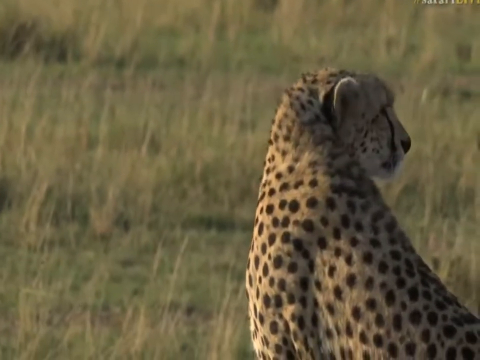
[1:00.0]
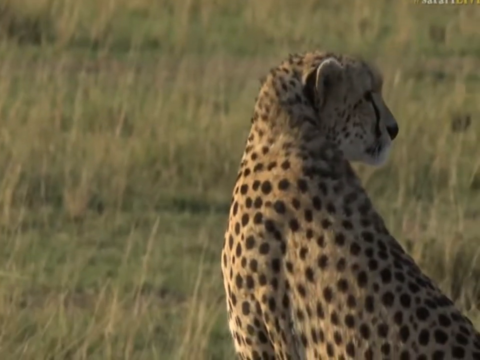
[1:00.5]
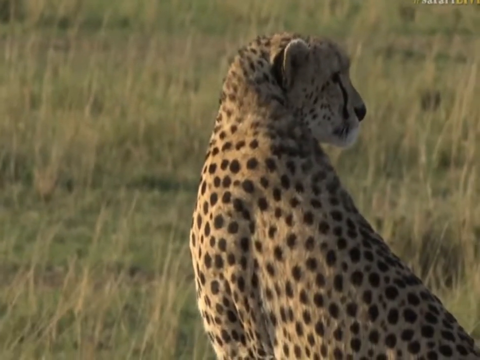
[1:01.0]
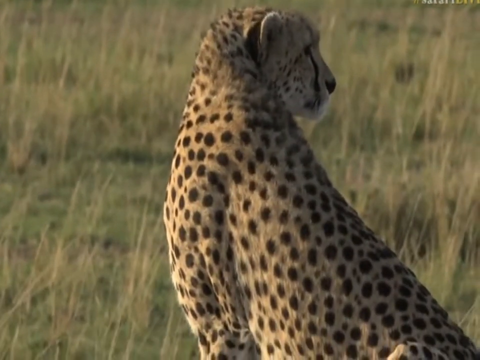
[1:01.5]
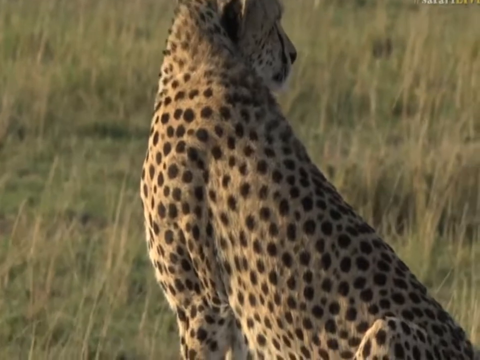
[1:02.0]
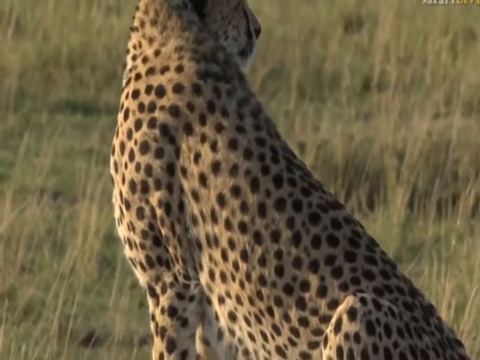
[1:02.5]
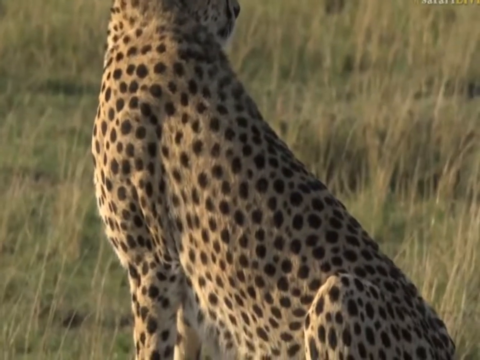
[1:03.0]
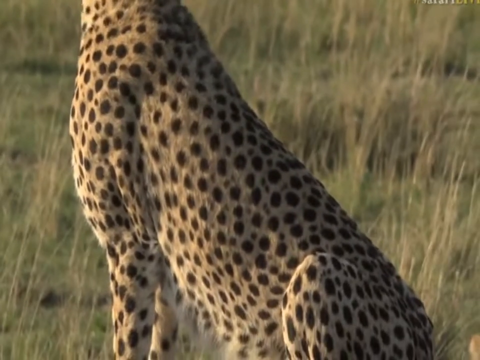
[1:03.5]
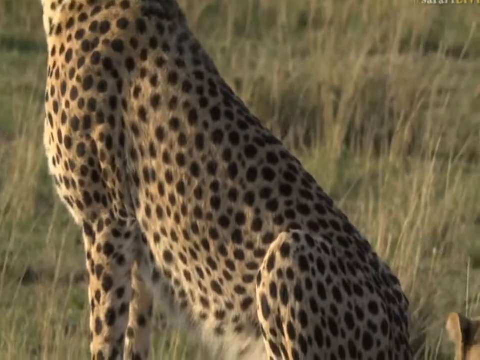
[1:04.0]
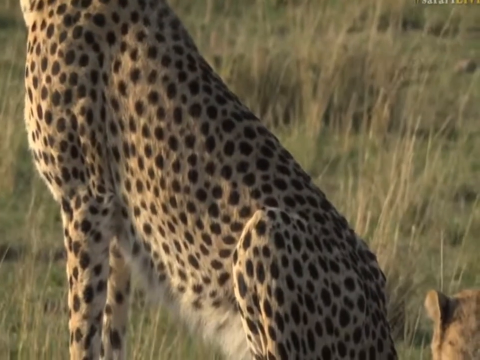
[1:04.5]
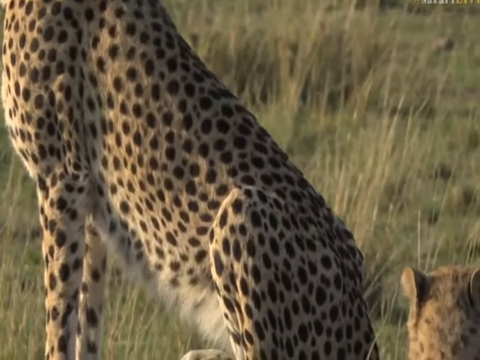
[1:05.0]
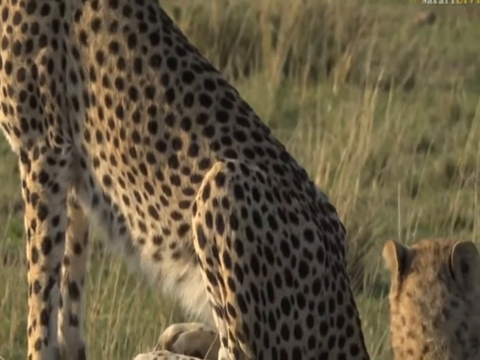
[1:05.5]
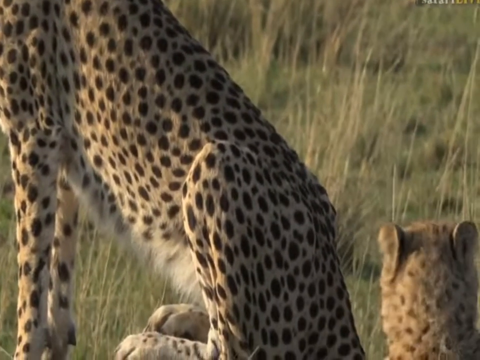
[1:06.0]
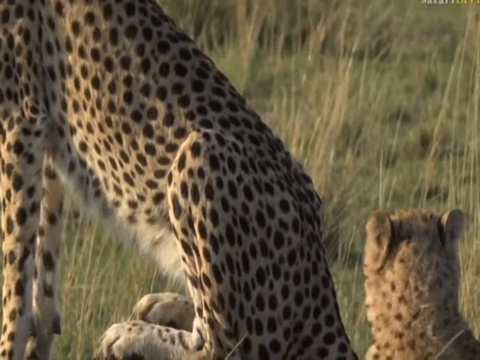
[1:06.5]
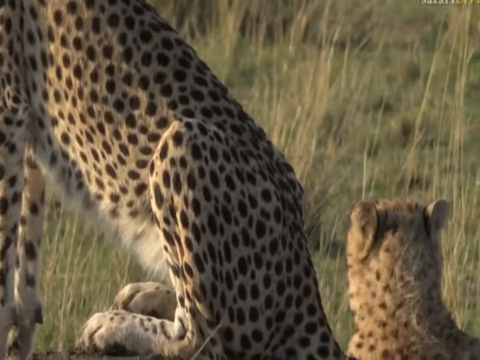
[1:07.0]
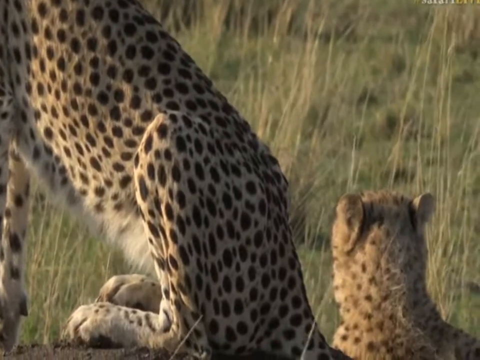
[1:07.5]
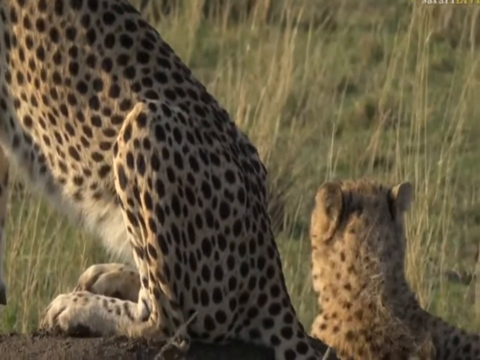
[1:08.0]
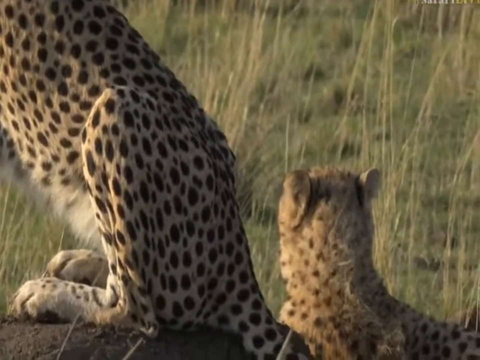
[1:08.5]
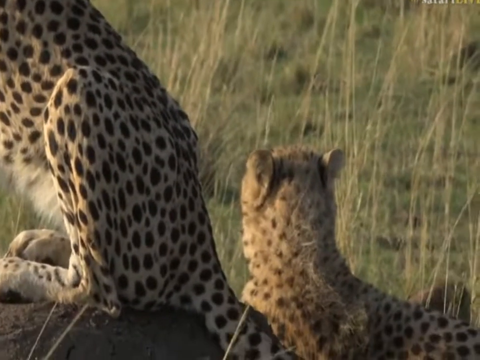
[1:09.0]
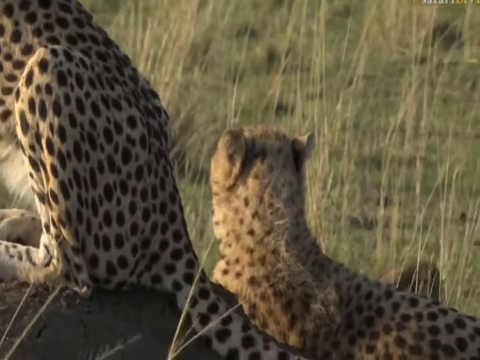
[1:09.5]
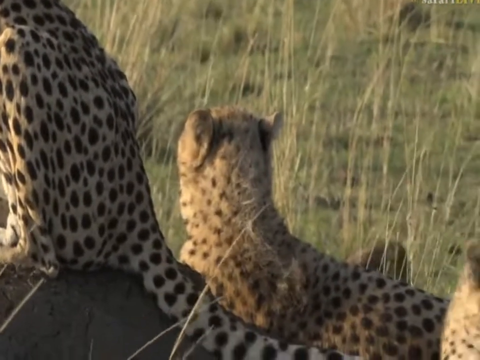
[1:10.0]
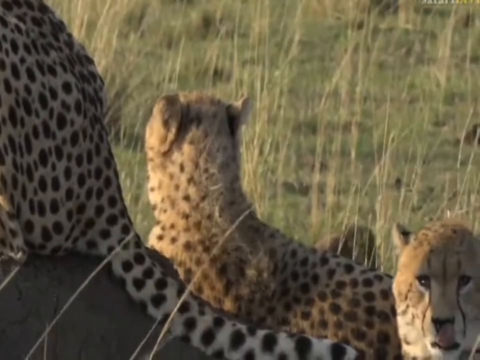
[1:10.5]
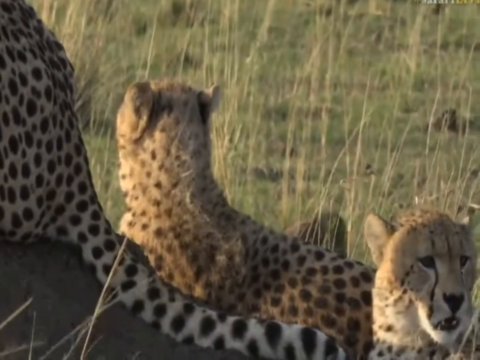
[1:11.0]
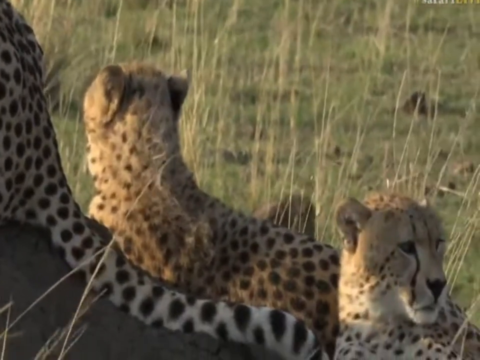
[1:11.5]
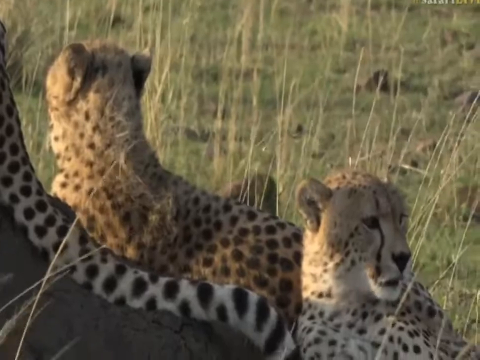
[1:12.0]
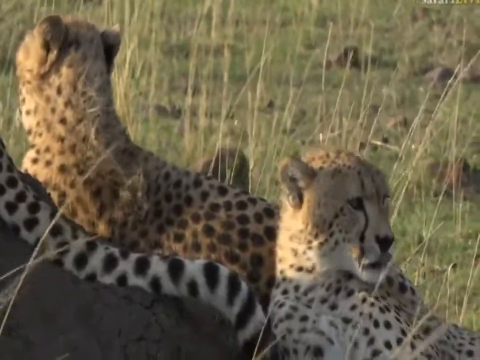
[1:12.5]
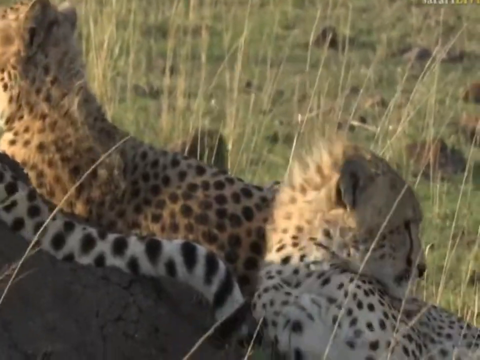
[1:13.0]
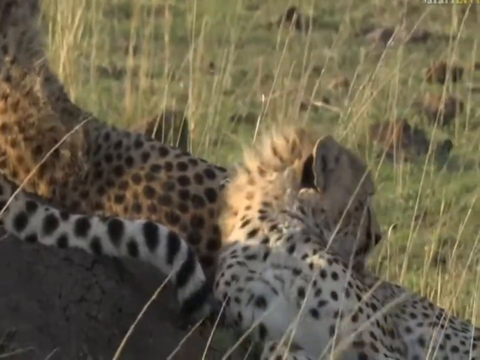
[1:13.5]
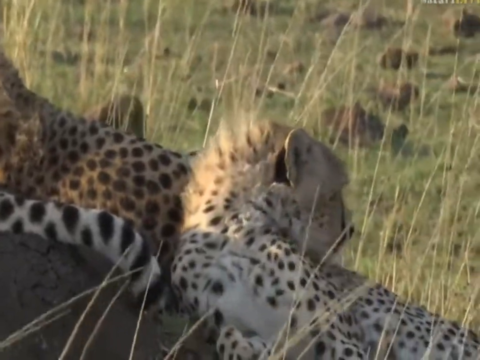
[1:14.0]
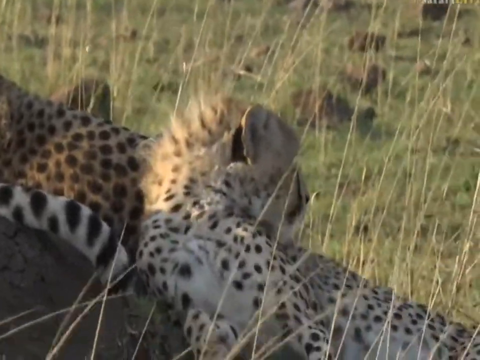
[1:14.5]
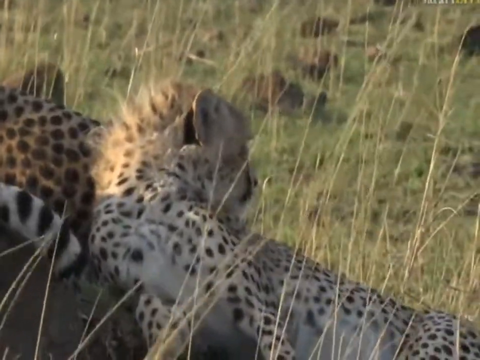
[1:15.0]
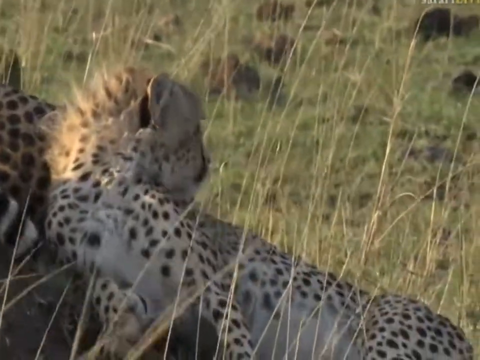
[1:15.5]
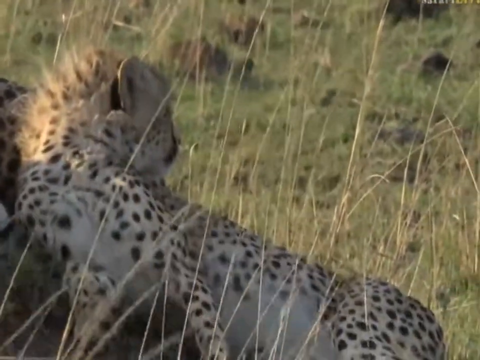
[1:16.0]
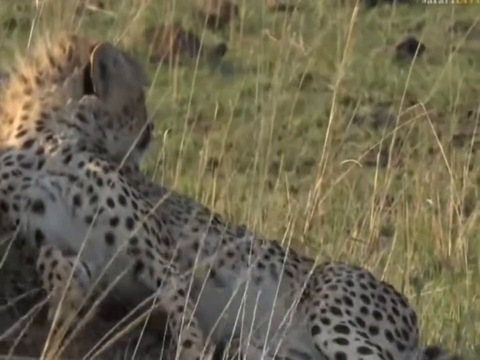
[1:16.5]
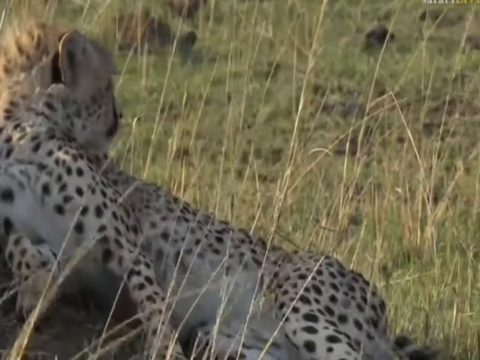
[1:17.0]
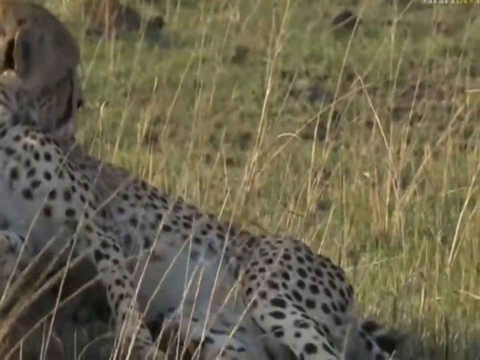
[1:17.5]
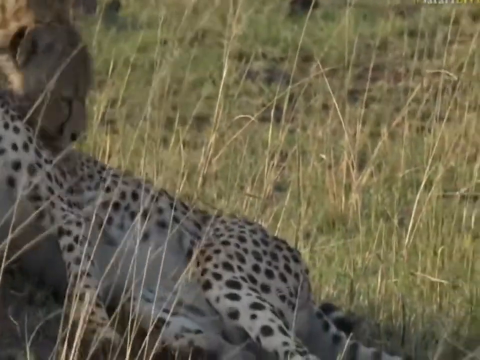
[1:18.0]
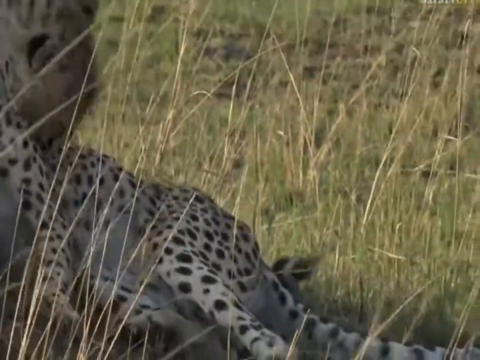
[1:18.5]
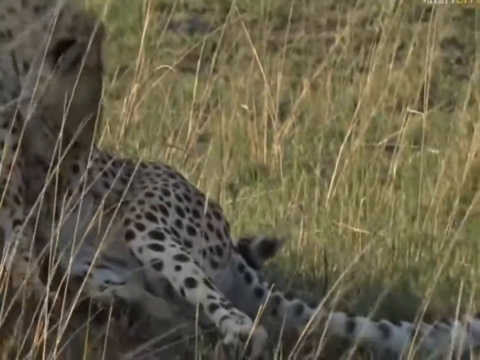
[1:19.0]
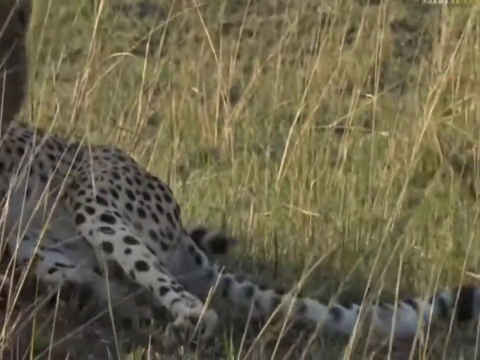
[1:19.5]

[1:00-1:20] The leopard is still sitting on top of the hill, its body facing the left while its head is turned all the way toward the right side, probably toward where the van went. Its head then turns toward the left again as the camera pans down toward the rest of its body. The back of the head of one of the leopards sitting or lying at the bottom of the little hill comes into view. One leopard lying at the bottom of the hill faces away from the camera, while the other faces the camera with its head turned away; it seems to be licking itself, its tongue coming out to lick its body, and it looks like it bites itself a little. Three leopards are on the little hill.